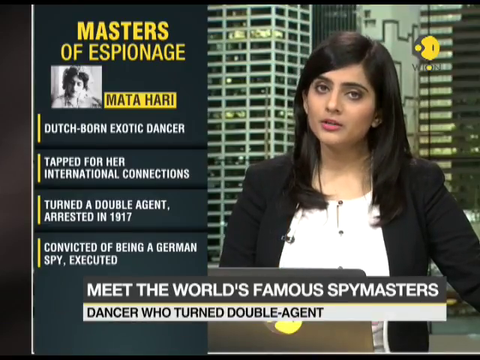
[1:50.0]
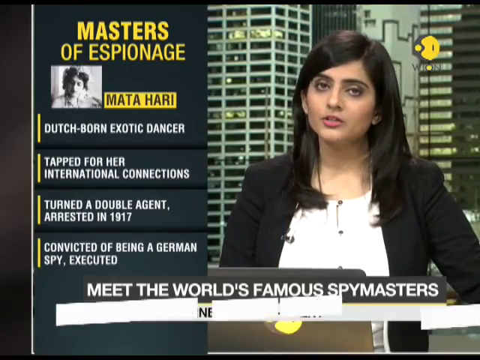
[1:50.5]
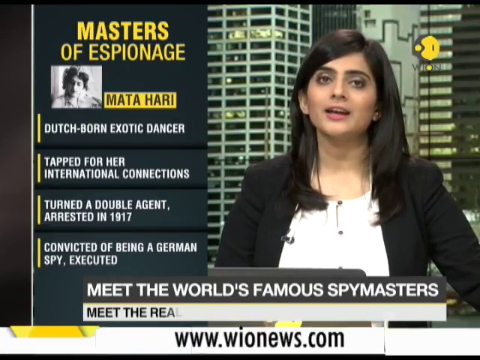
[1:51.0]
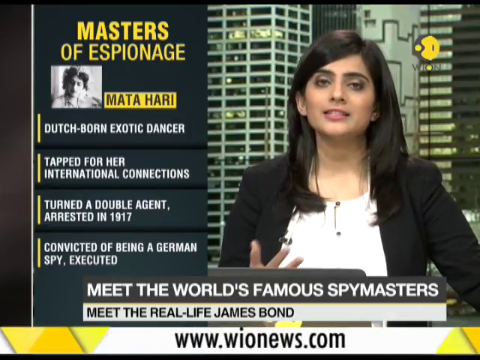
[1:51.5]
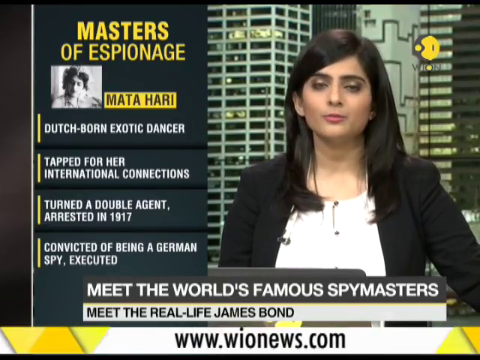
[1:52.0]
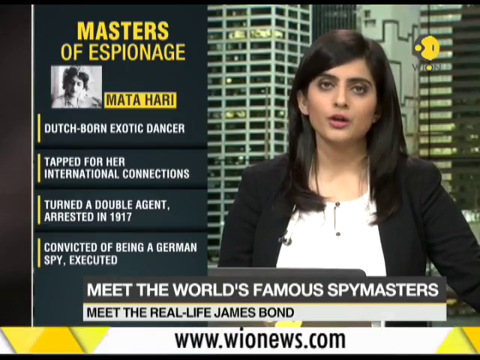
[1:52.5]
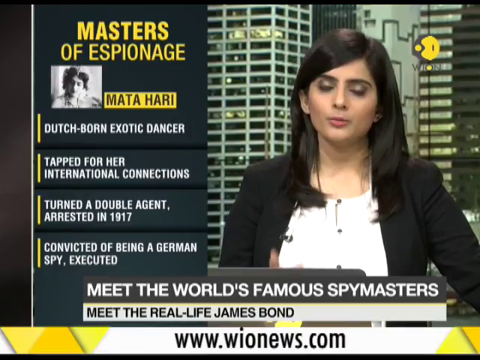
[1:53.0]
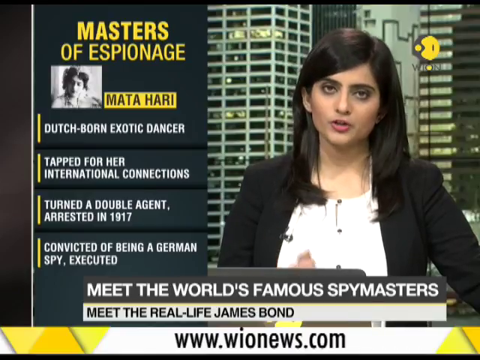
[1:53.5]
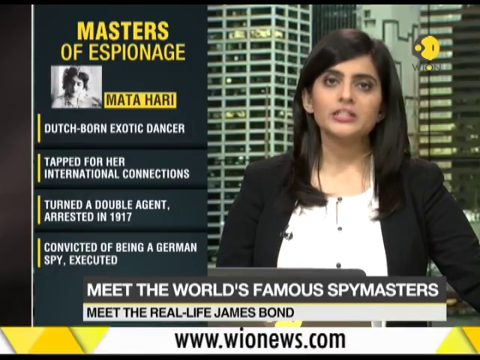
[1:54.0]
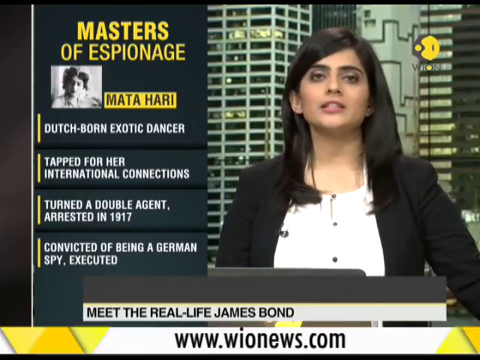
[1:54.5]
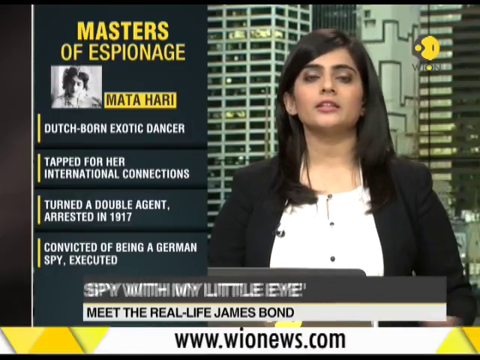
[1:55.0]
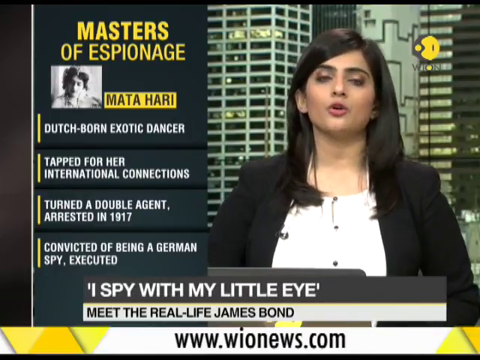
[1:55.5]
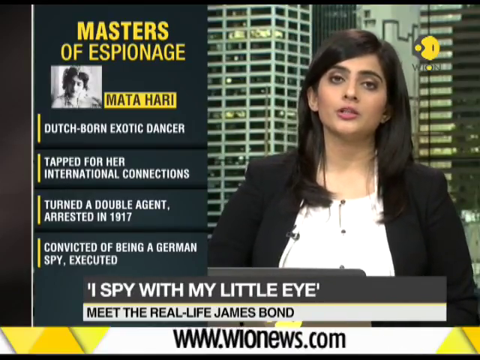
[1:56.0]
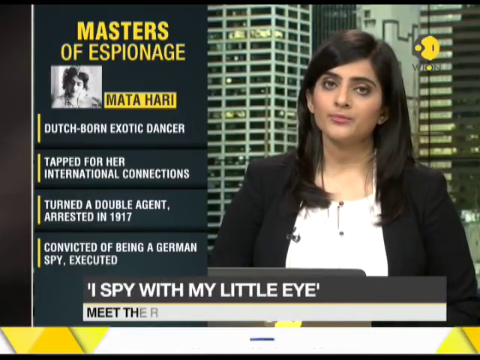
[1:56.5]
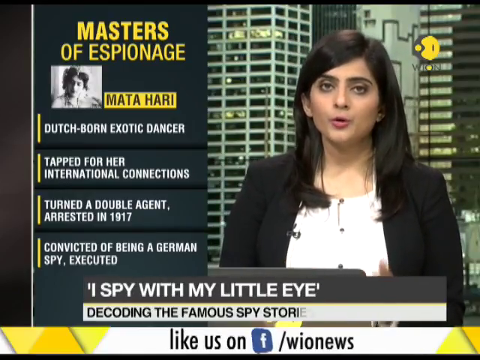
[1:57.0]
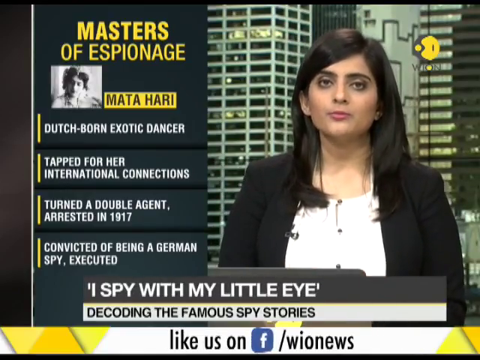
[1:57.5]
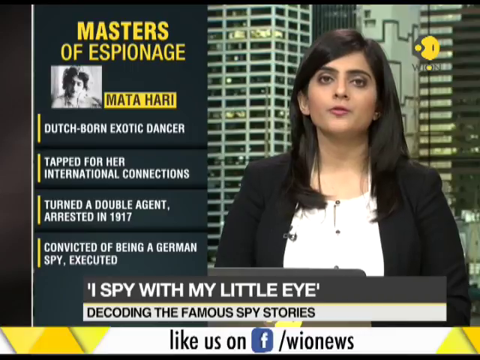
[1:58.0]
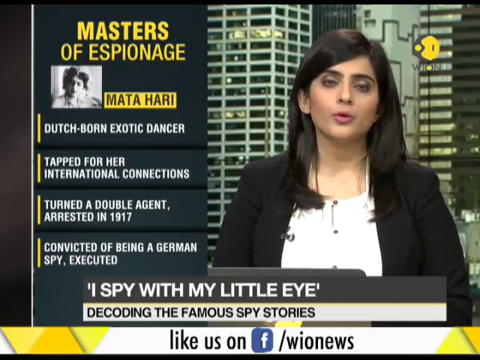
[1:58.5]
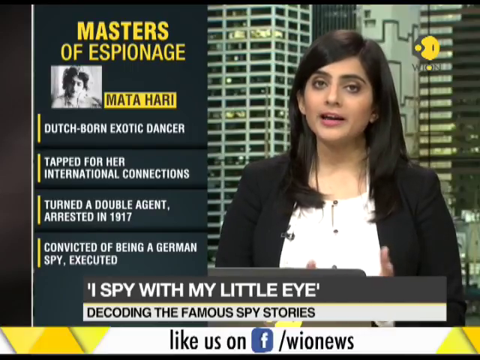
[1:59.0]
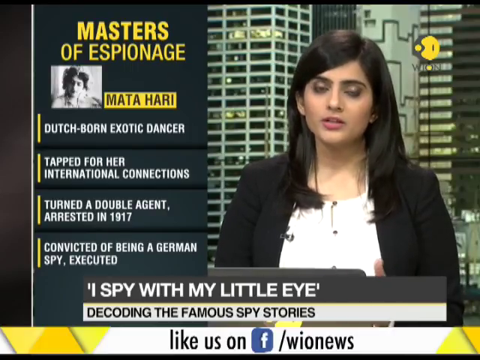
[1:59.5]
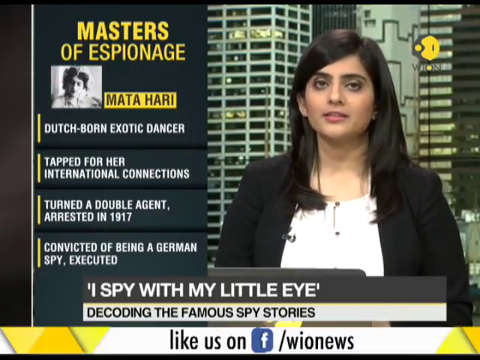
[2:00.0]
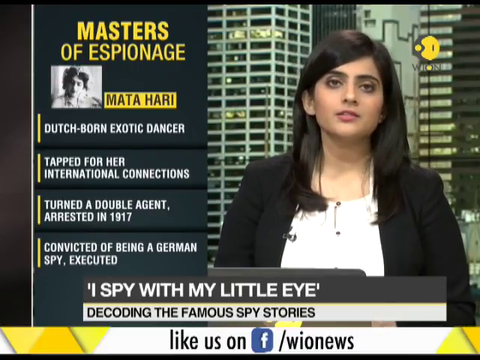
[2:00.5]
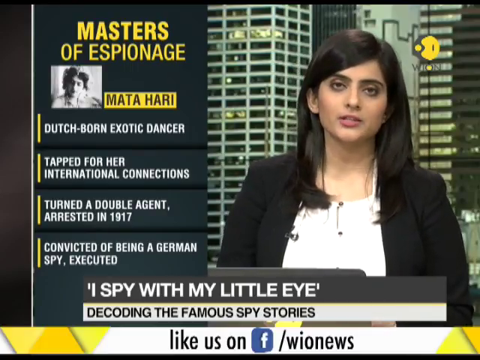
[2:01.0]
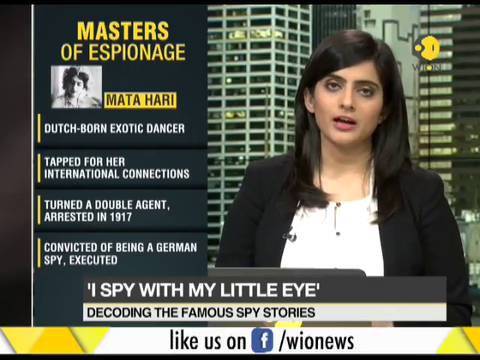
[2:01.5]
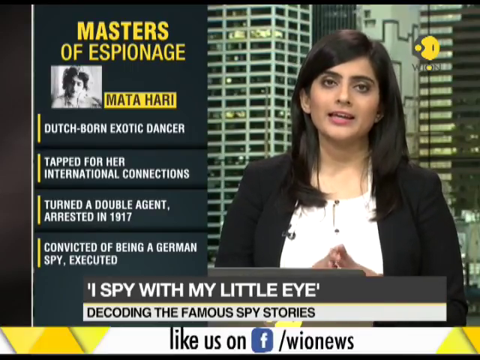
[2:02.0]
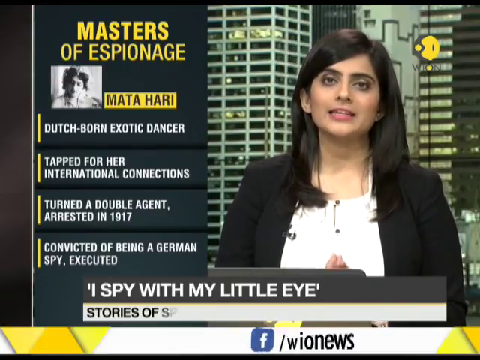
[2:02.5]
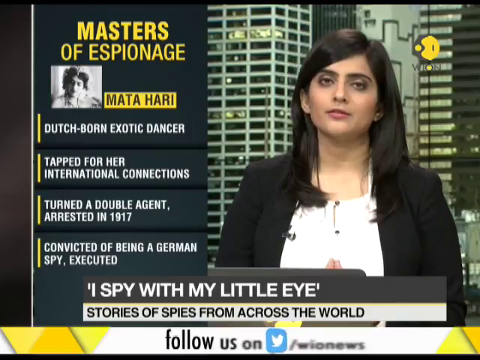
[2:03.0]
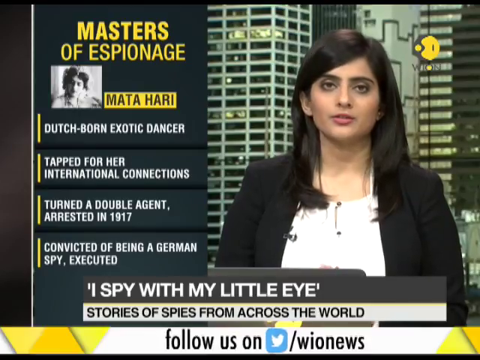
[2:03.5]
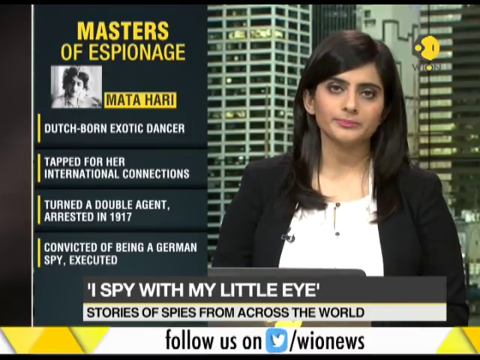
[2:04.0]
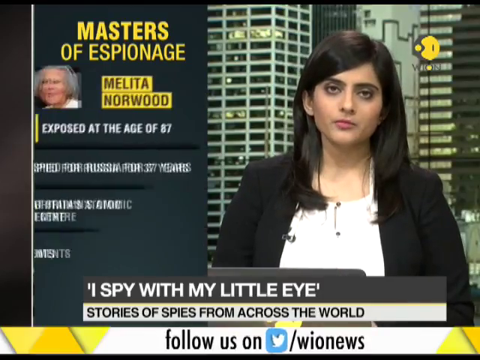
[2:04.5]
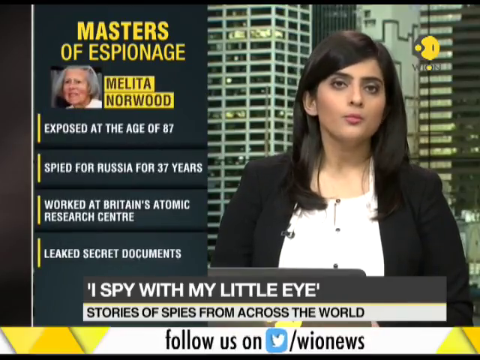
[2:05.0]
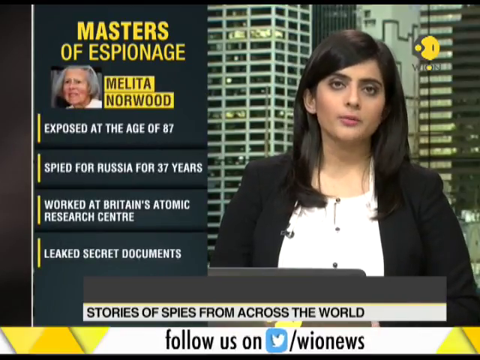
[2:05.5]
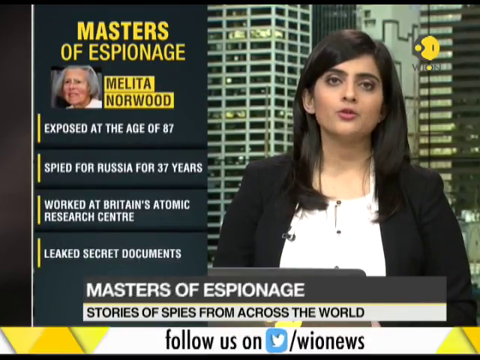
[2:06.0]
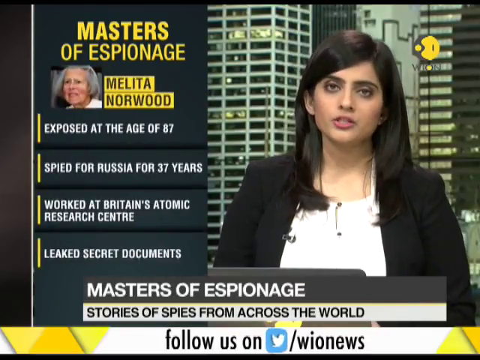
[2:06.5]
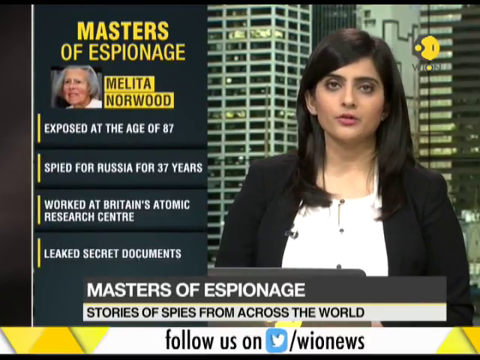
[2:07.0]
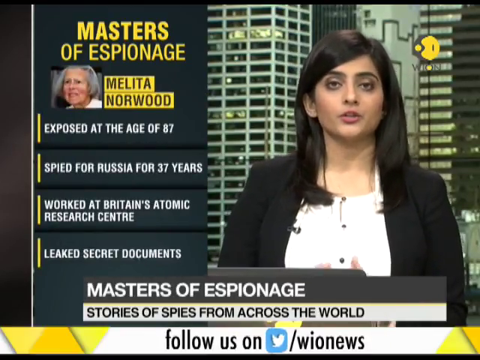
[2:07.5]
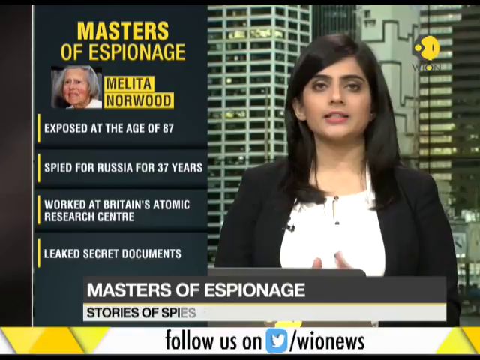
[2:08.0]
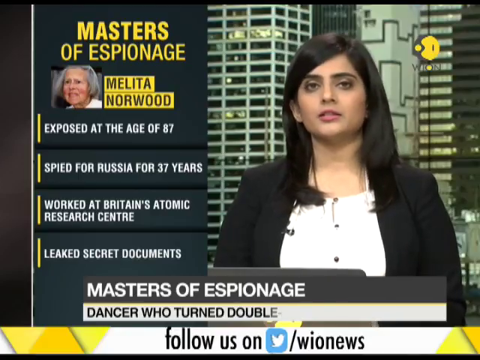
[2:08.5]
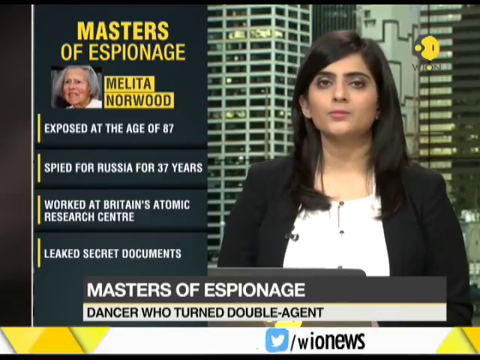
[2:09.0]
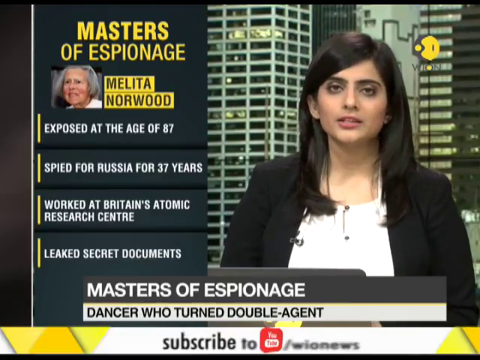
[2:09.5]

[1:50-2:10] A woman with dark hair wears a black jacket and white top with a microphone clipped to her jacket and talks into the camera, with a large city background behind her. Labels at the bottom read "Meet the world's famous spymasters" and, below, "Meet the real life James Bond." A section added to the video reads "Masters of espionage" at the top, with what appears to be a black and white photo of a woman labeled "Mata Hari" and various facts listed below. The bottom labels then change to "I spy with my little eye" and "Decoding the famous spy stories."